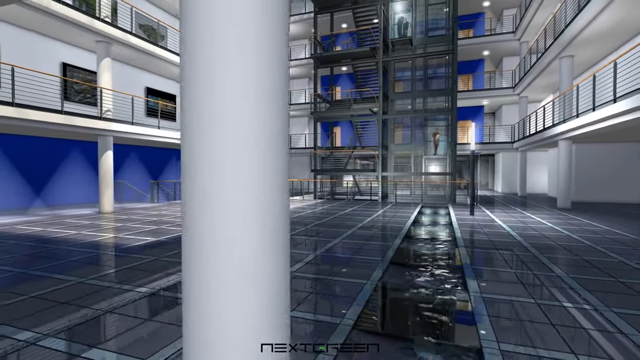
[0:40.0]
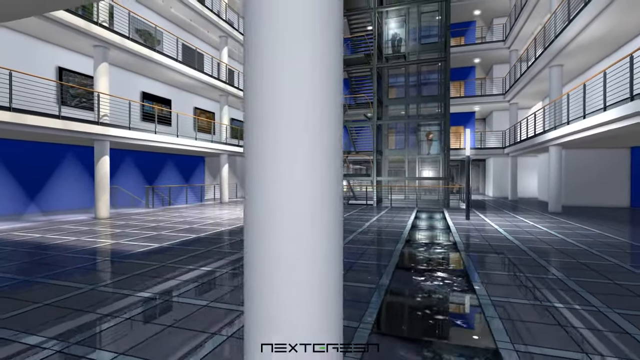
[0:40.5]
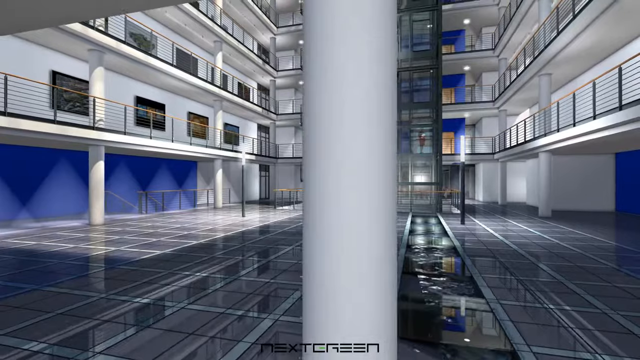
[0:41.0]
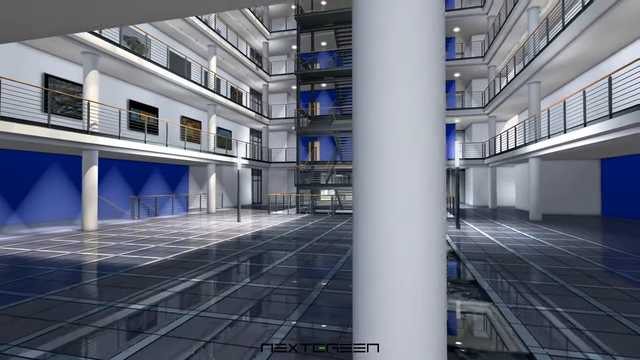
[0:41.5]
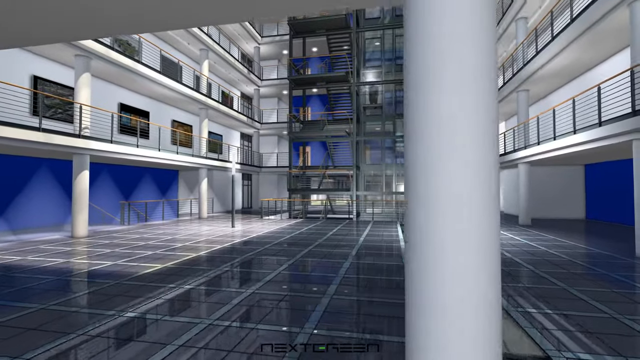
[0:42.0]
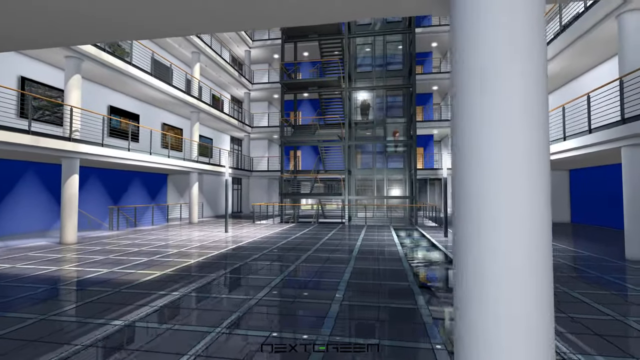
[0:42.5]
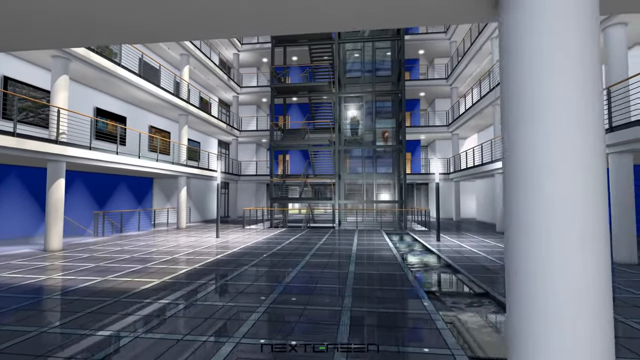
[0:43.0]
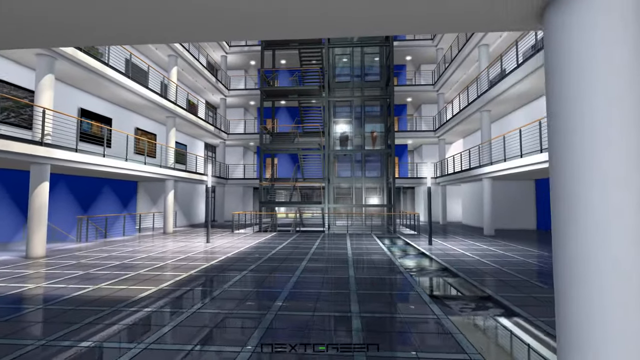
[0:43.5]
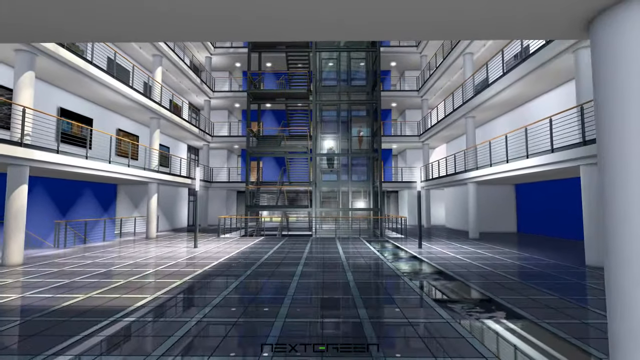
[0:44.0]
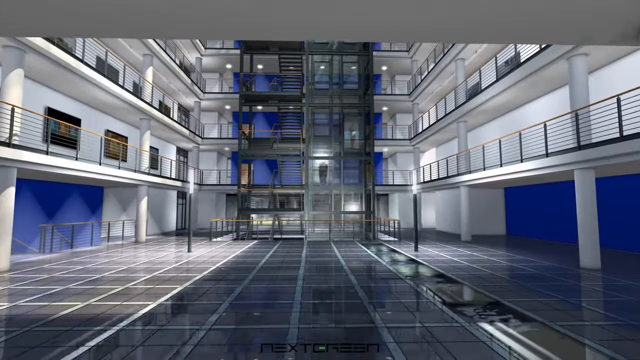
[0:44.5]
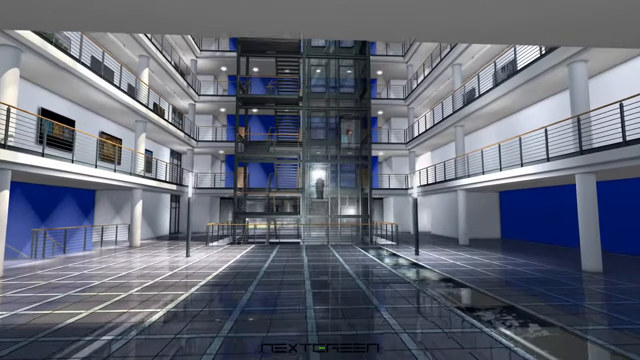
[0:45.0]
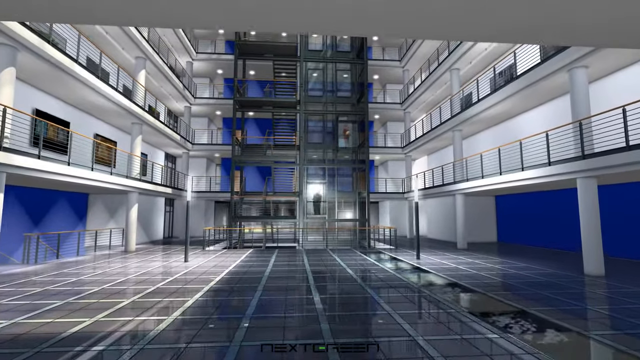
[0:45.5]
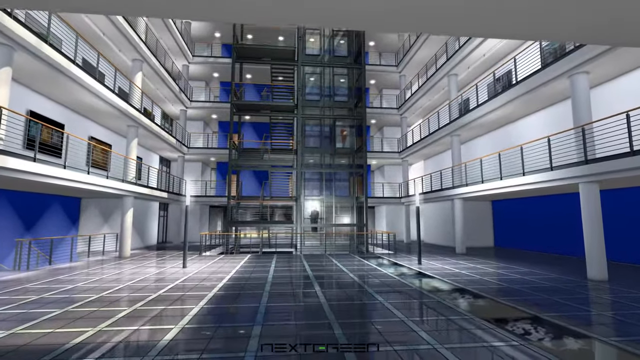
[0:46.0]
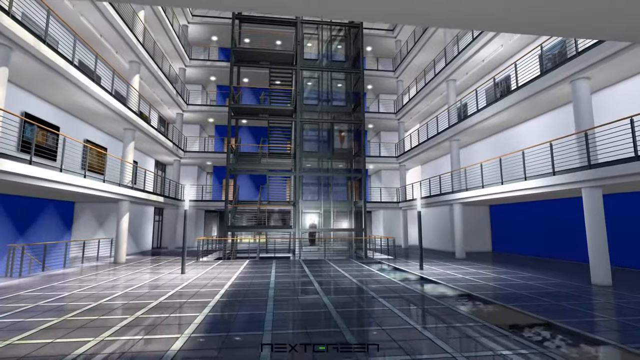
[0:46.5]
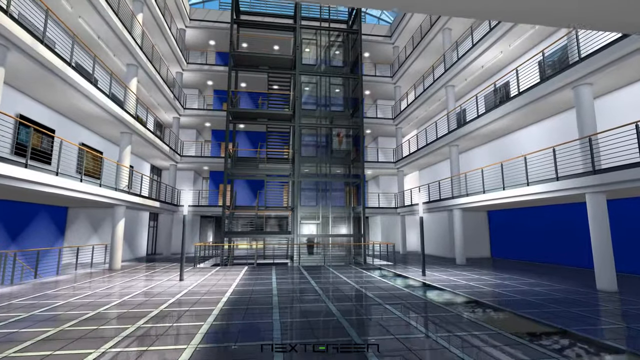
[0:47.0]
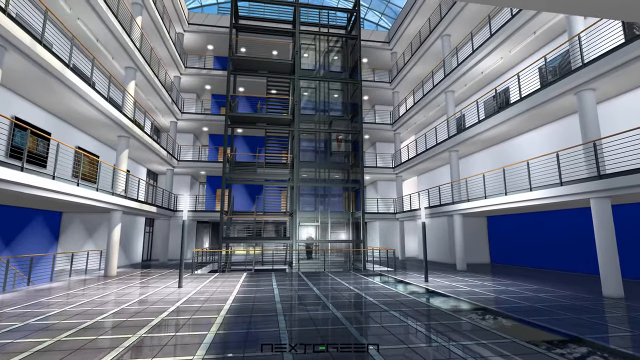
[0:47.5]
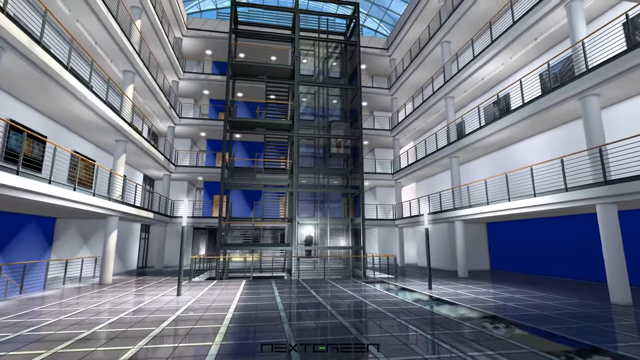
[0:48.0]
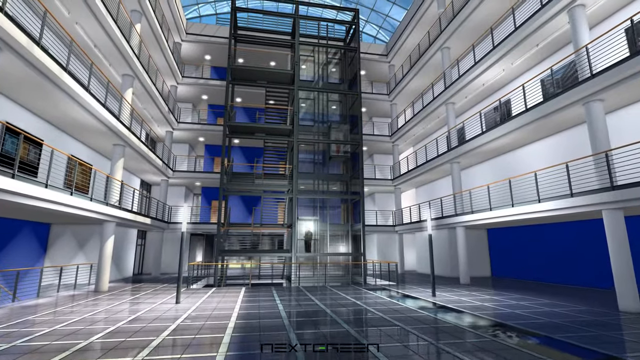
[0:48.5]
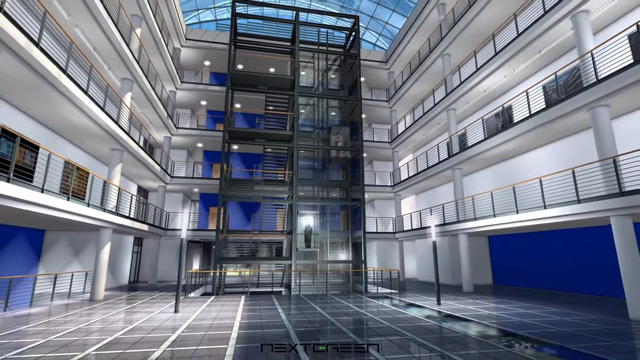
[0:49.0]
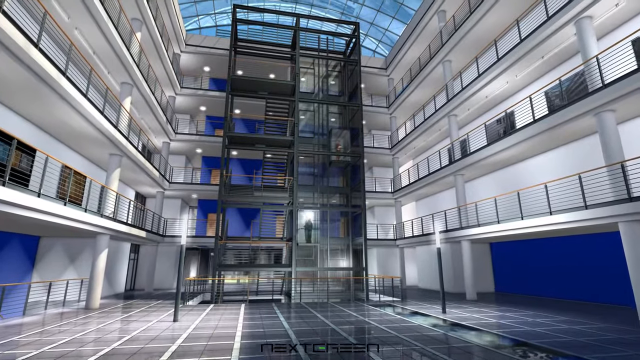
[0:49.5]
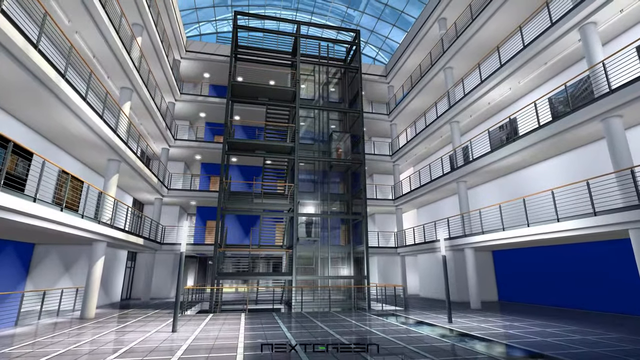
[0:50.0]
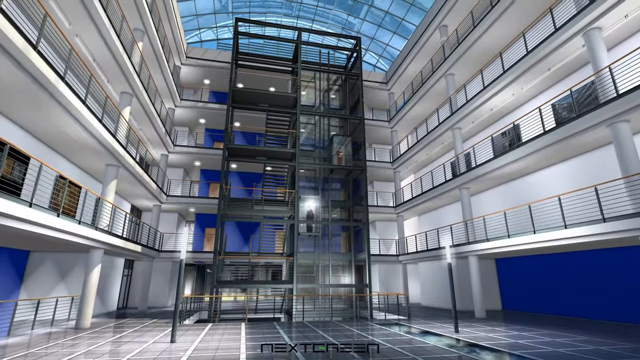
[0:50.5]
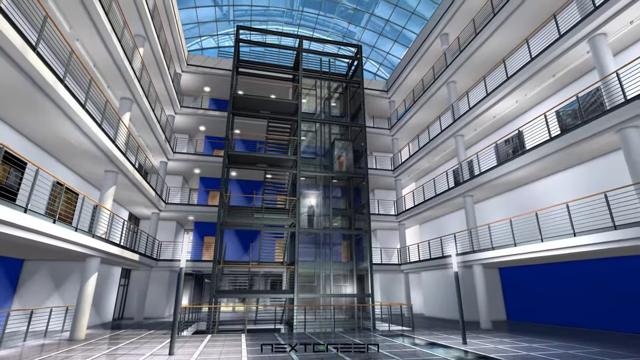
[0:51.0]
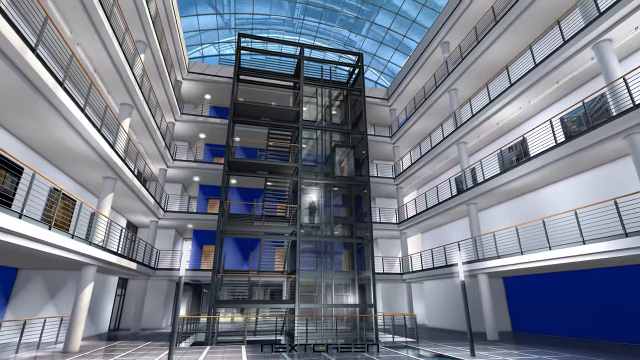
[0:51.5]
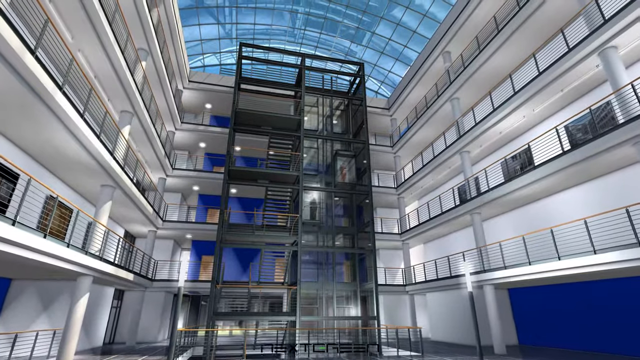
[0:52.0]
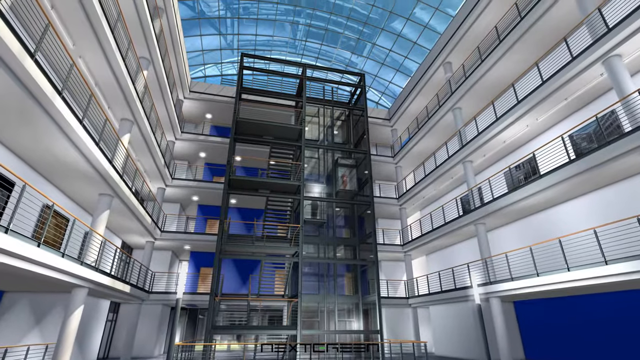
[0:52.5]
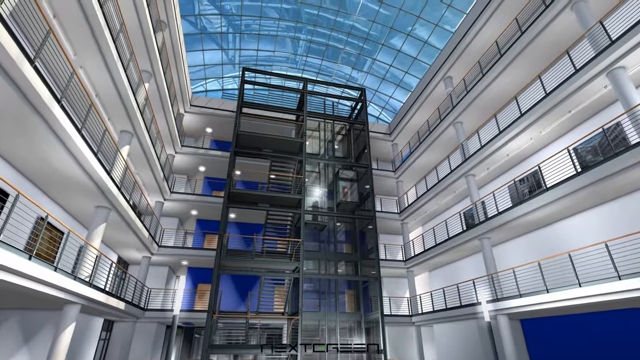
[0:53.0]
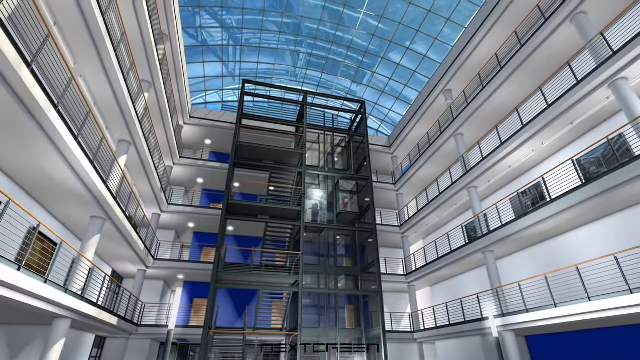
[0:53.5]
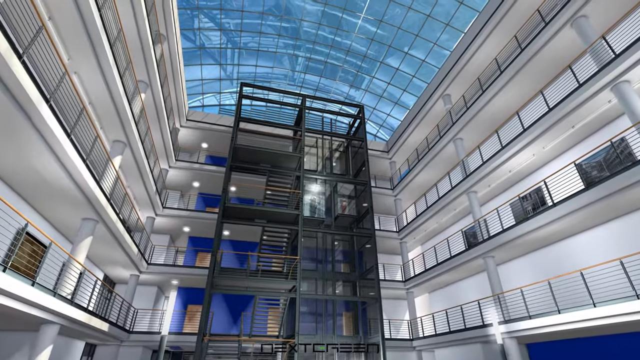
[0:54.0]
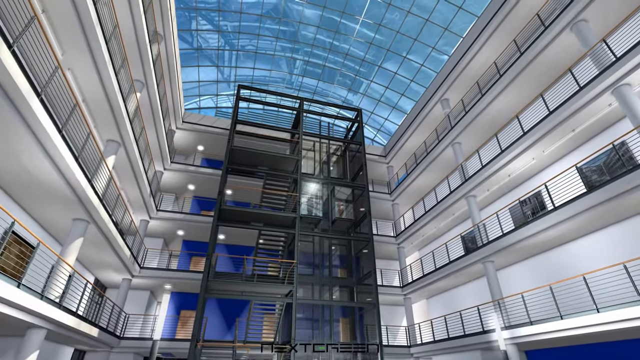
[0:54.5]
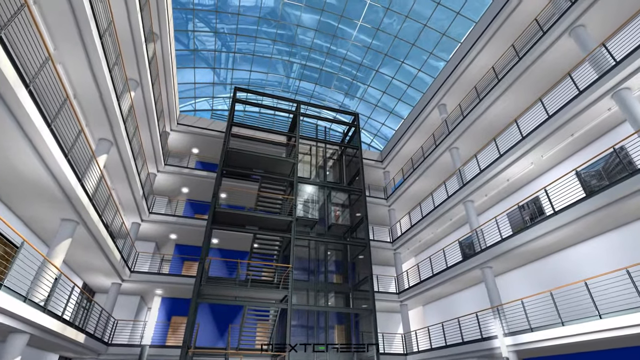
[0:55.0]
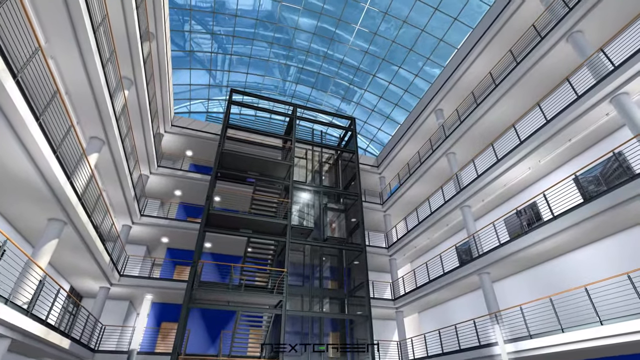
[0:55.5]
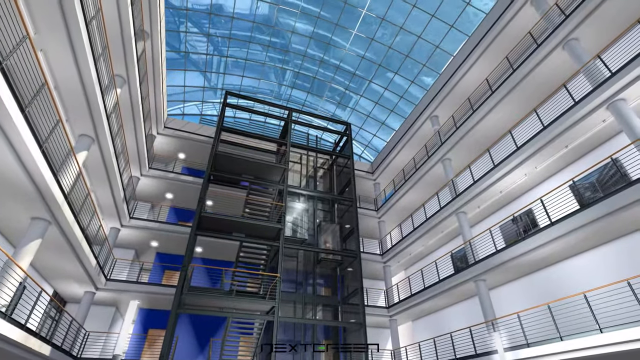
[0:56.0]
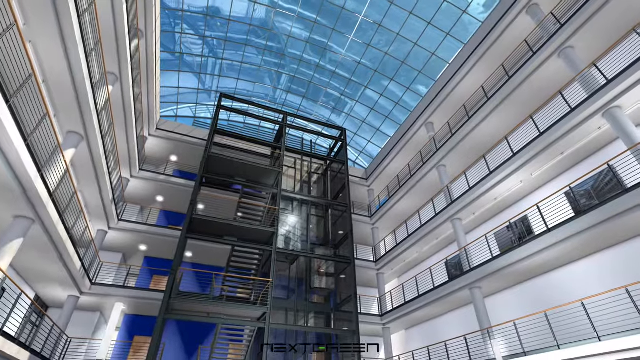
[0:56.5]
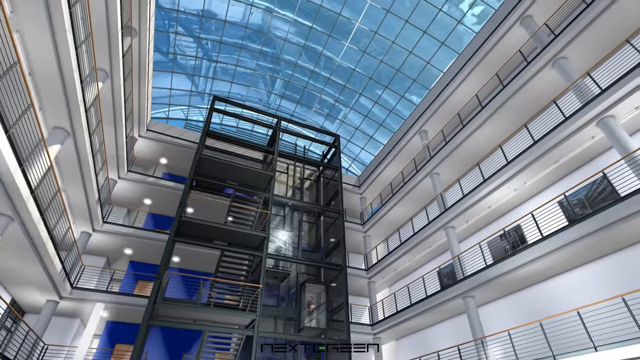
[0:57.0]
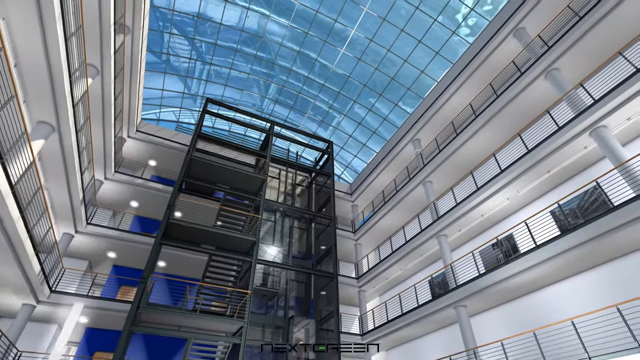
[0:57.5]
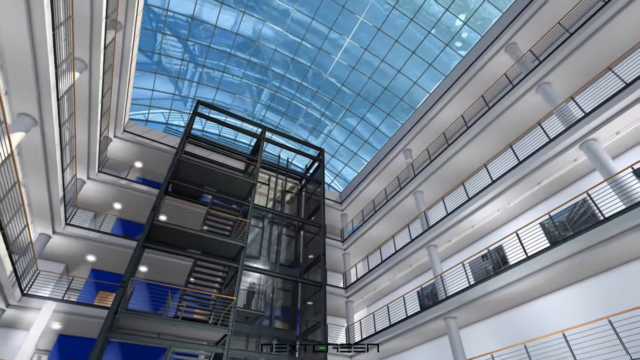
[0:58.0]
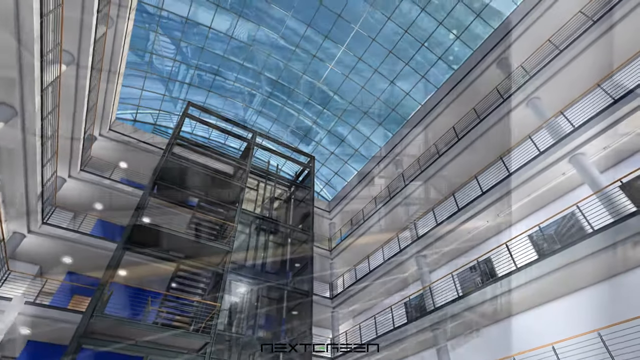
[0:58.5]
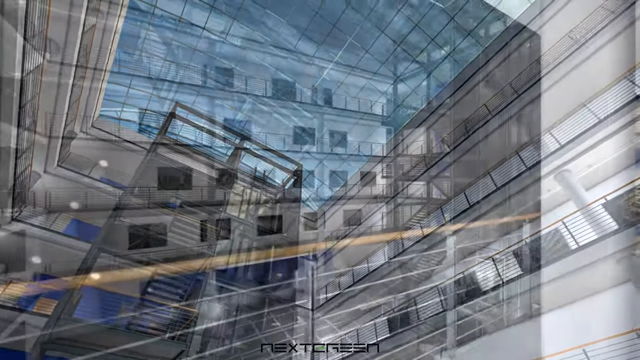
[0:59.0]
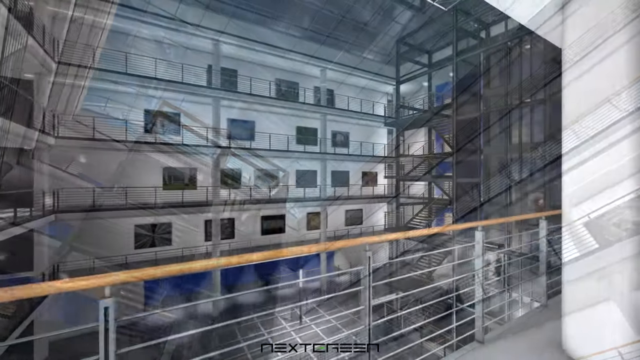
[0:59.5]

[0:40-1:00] More of the ground floor of the computer-generated office building is shown. The floor is made of glass, and a kind of water channel runs through it. There appear to be glass plates over certain parts of the channel, kind of like transparent bridges to walk over. There is an elevator at the far end of the building, and the same people go up and down in it without getting off. The animation is very simple, and the building is seen from different camera angles. It almost looks like a real building, but the behavior of the people on the elevators makes it obvious that it is computer-generated.